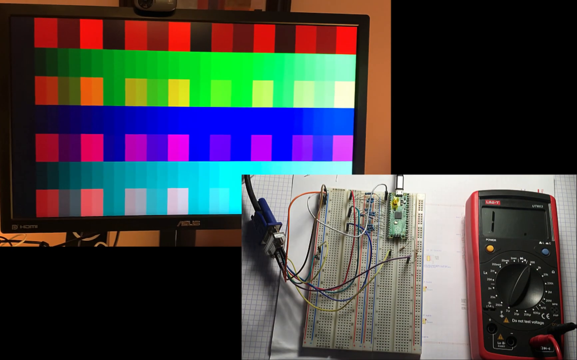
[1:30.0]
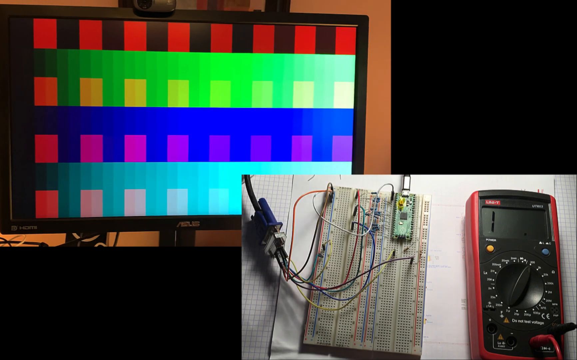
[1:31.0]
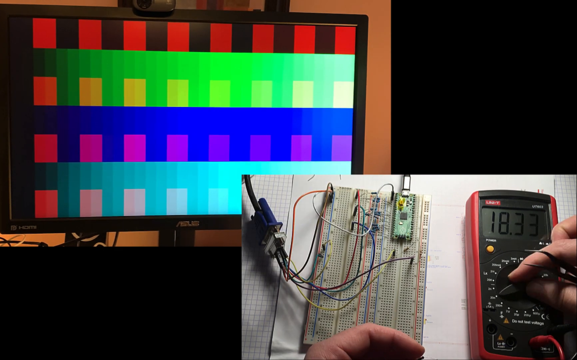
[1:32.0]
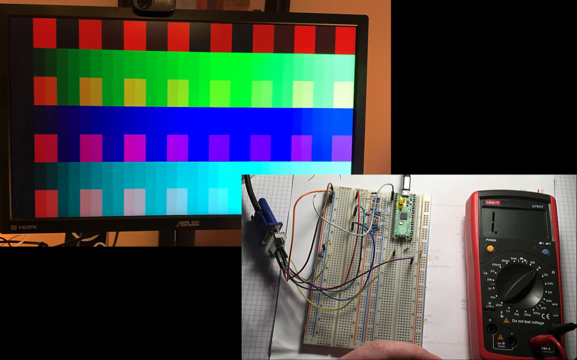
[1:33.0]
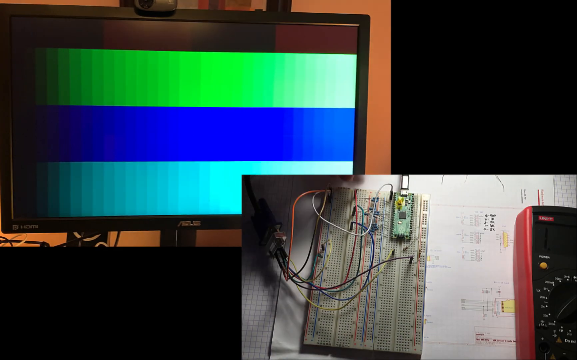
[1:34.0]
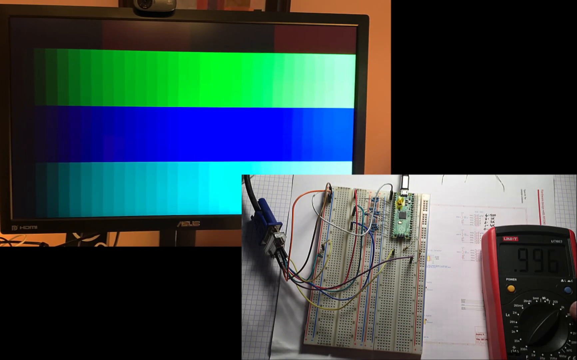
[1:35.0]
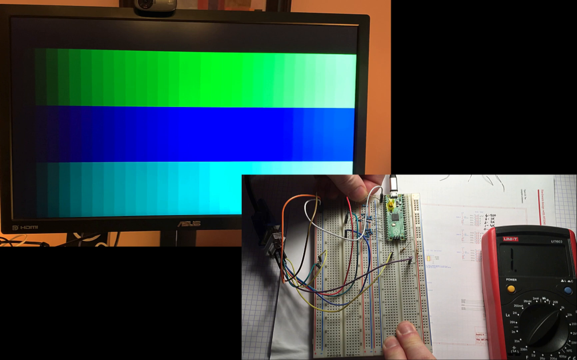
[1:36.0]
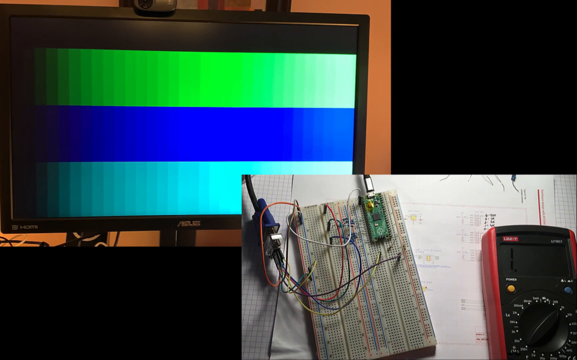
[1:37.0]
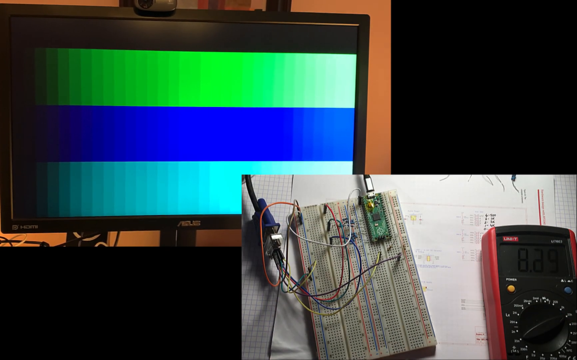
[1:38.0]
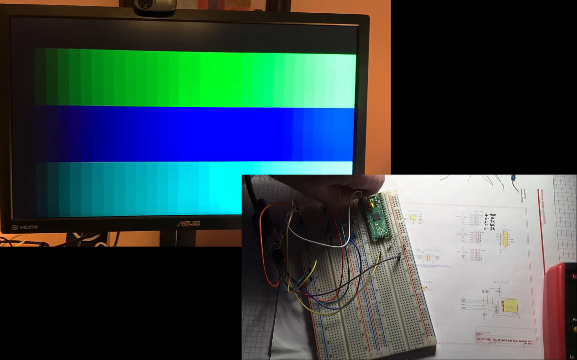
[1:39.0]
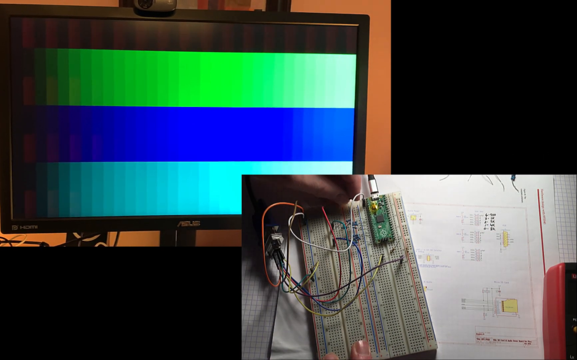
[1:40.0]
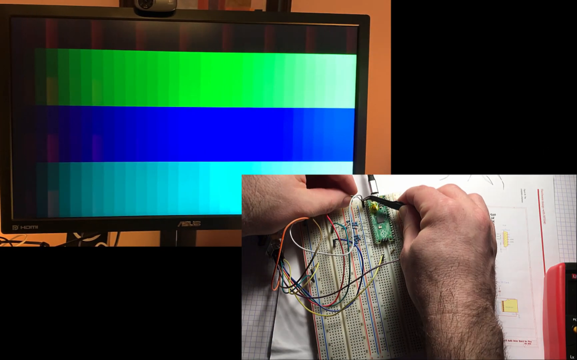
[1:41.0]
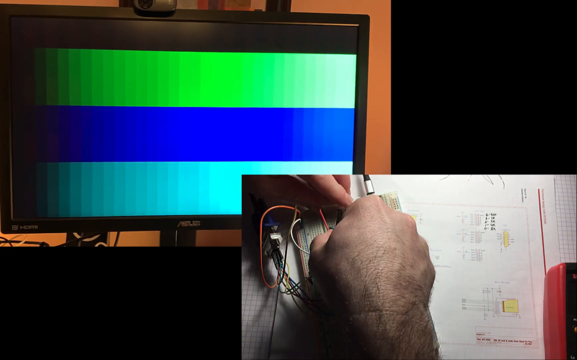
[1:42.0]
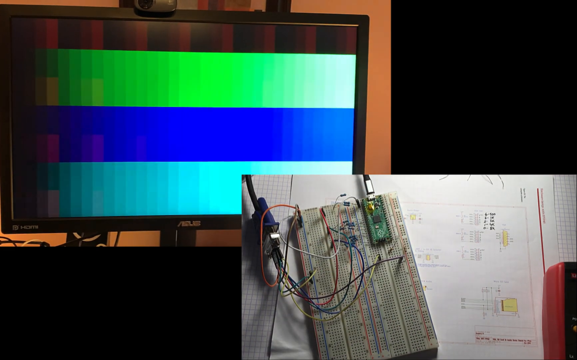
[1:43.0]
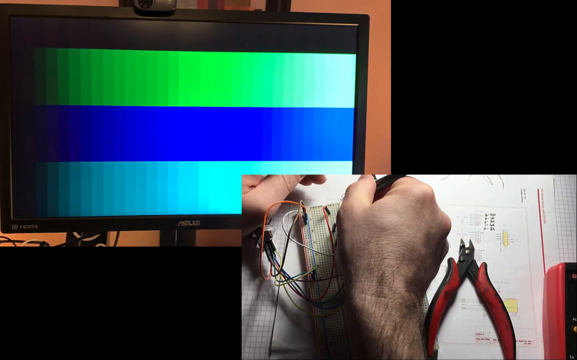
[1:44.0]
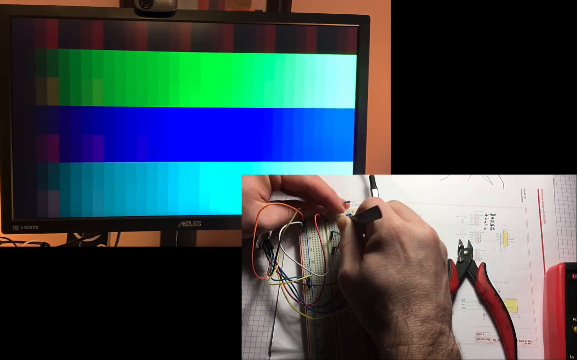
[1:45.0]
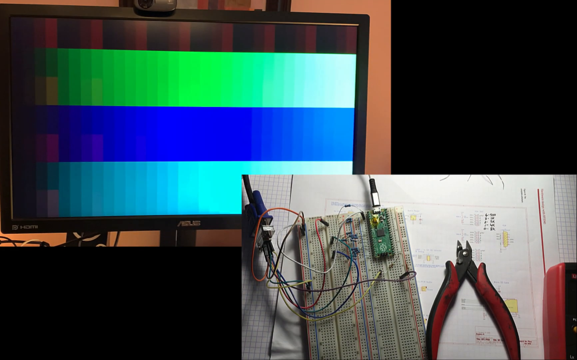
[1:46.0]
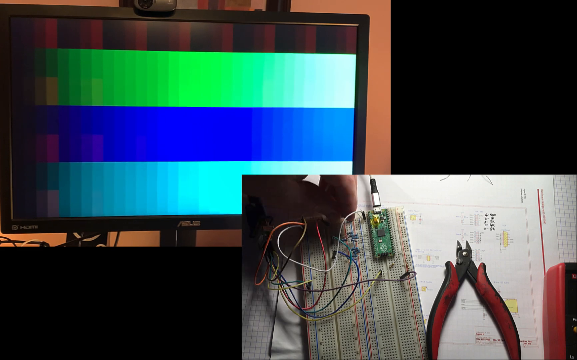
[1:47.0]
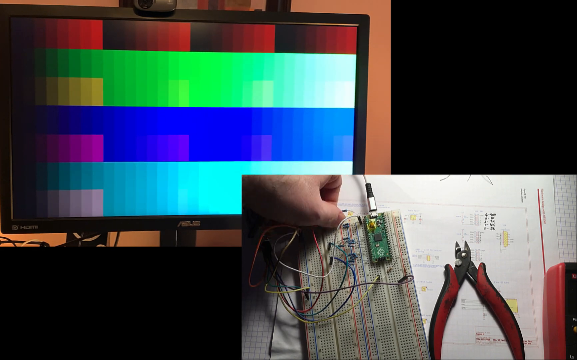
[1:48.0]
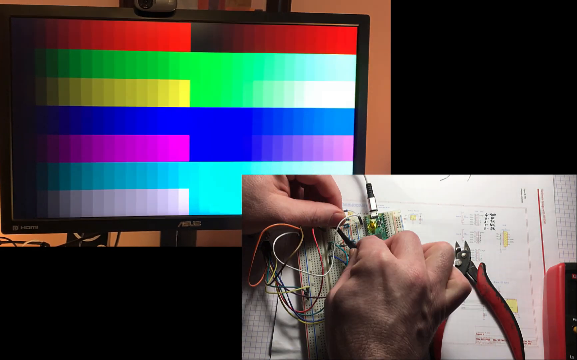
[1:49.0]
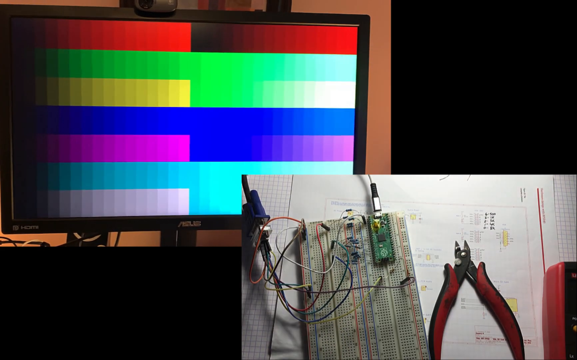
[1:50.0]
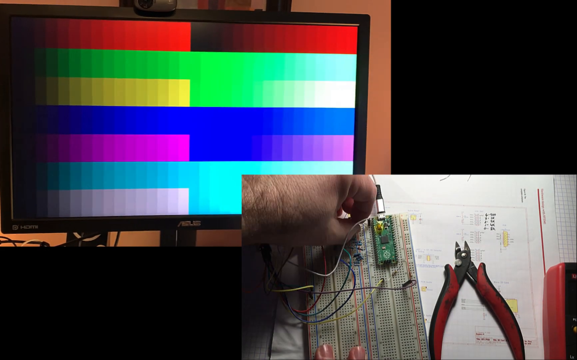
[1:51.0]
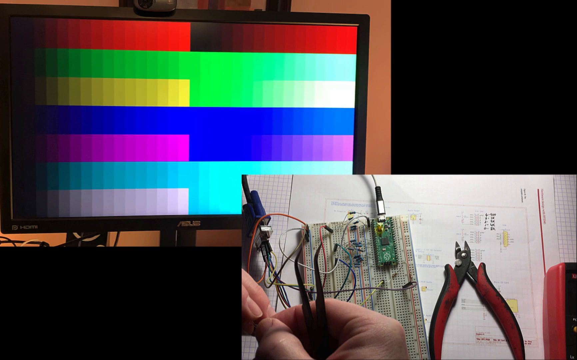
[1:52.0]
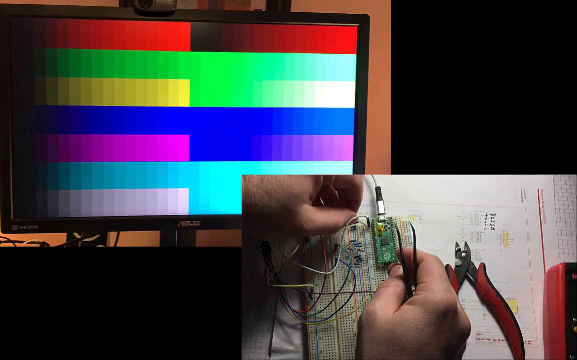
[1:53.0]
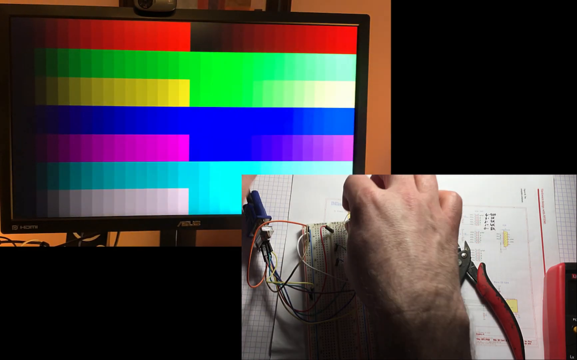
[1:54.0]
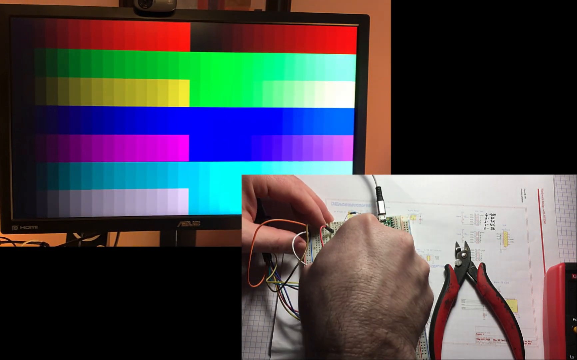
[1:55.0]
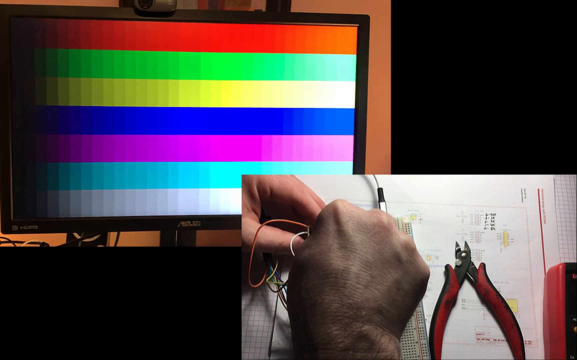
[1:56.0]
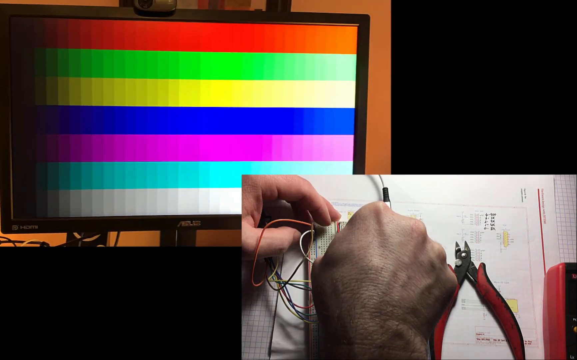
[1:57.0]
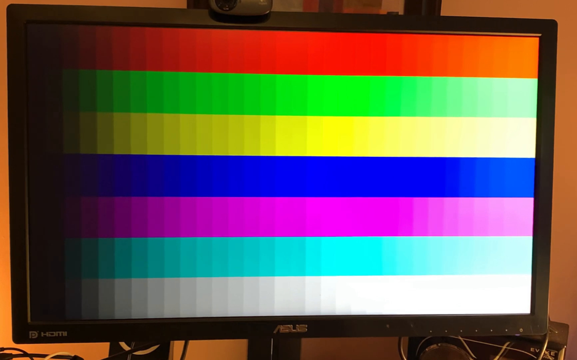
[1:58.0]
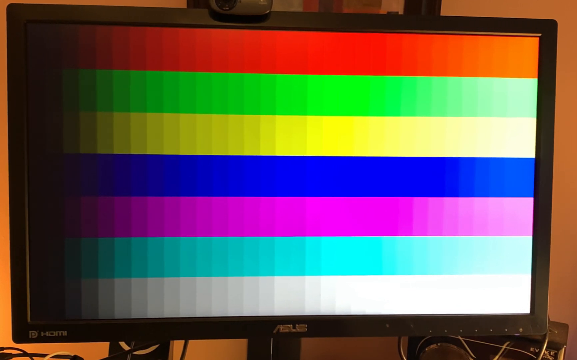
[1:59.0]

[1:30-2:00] Two images are shown. One is a computer monitor with multiple vibrant and pale colors on it and a webcam on top. At the bottom right is an image of what looks like an electronic board, similar to a motherboard, with wires coming out of it, on a piece of paper that looks like a diagram. To the right, a person's left and right hands hold a voltmeter whose screen reads 0.162. They work very fast; the footage is sped up more than double speed. They continue working on the very small electronic board and the voltmeter with a pair of snips and tweezers at a rapid pace, and it looks tedious. The video transitions to a close-up of the computer monitor with the vibrant colors, showing seven layers of color from top to bottom: reds to greens, yellows to blues, lavender, white, and baby blue. A smiley face appears at the bottom right as if someone drew it.